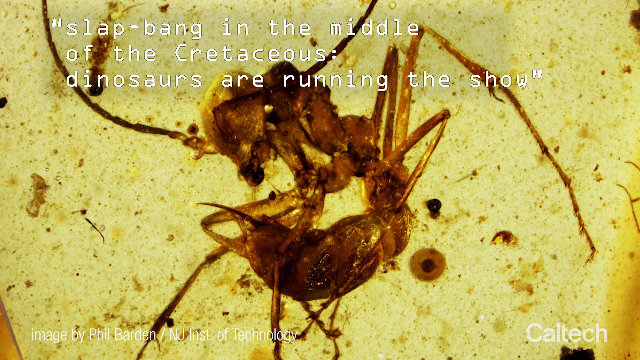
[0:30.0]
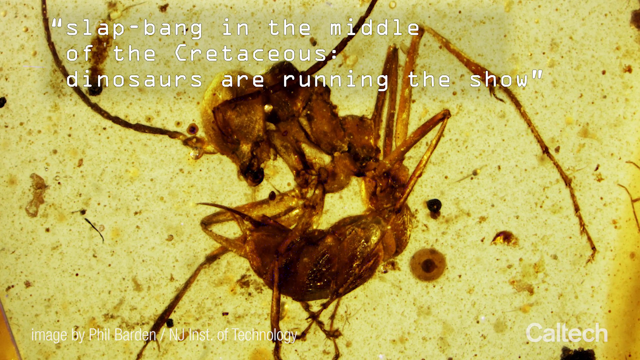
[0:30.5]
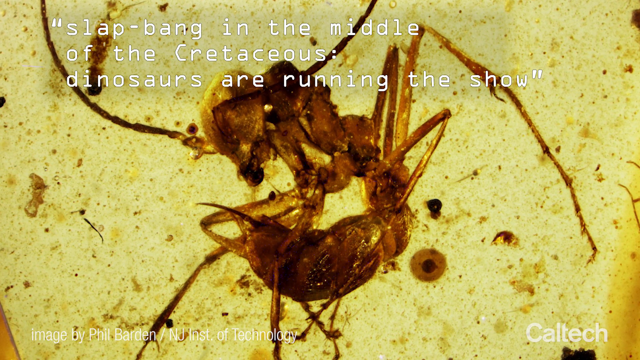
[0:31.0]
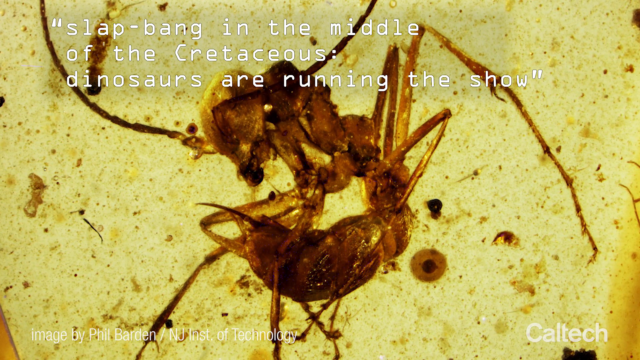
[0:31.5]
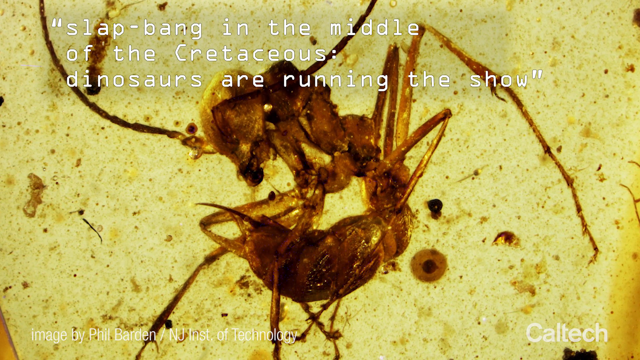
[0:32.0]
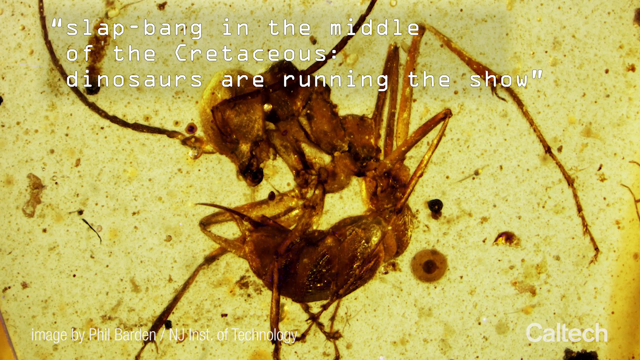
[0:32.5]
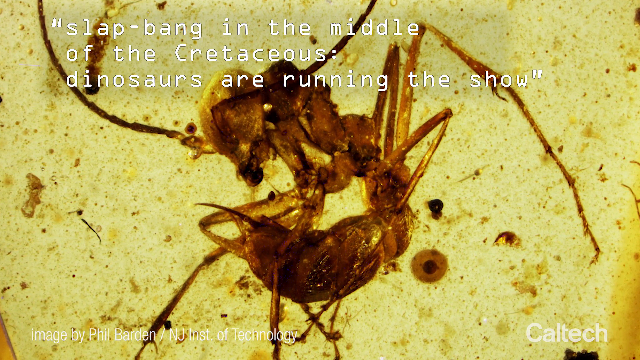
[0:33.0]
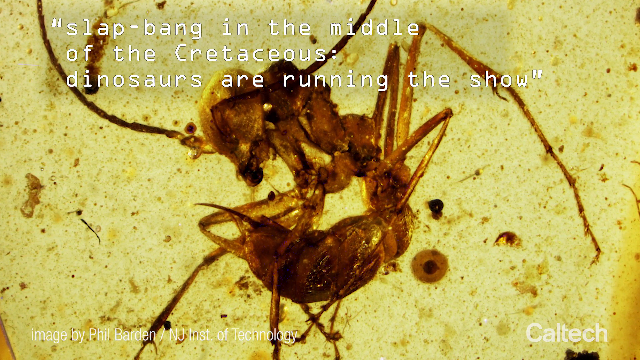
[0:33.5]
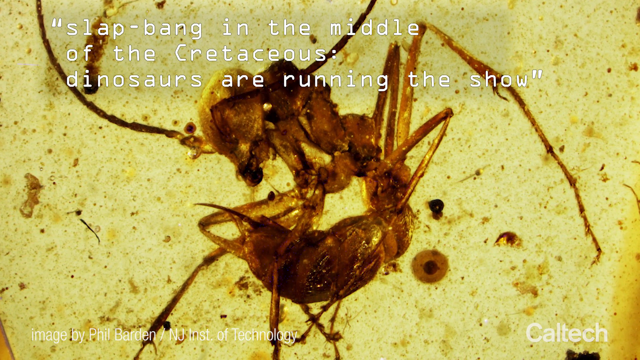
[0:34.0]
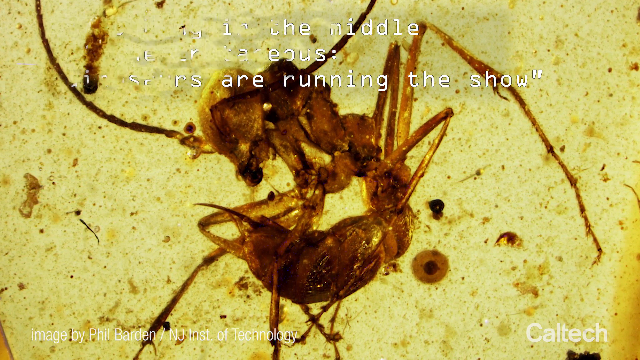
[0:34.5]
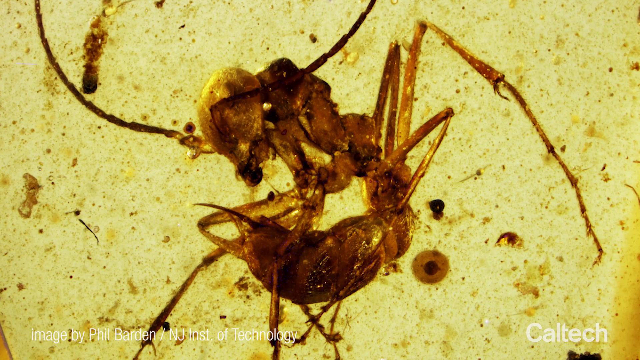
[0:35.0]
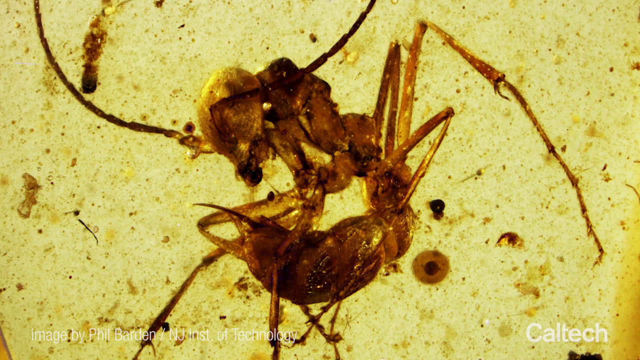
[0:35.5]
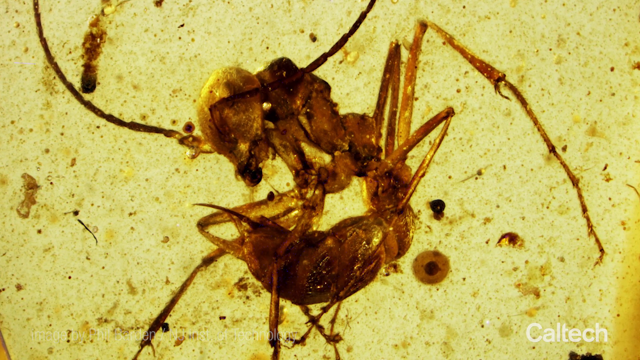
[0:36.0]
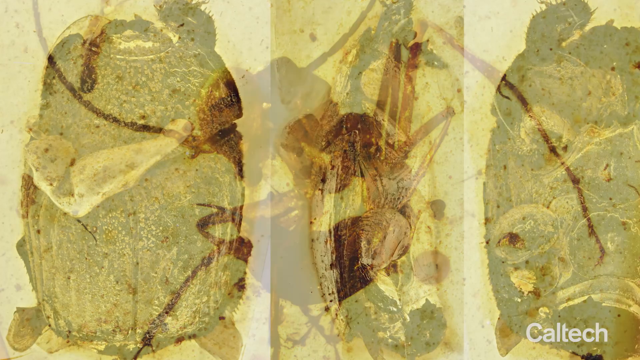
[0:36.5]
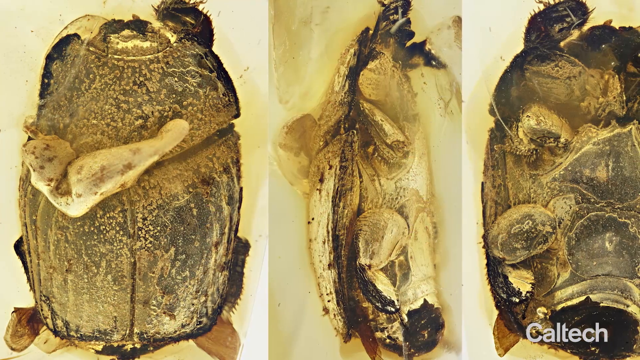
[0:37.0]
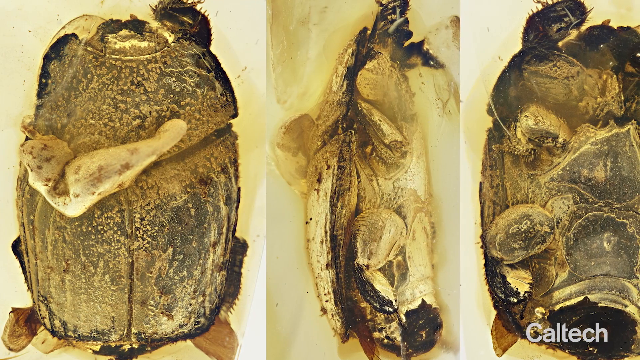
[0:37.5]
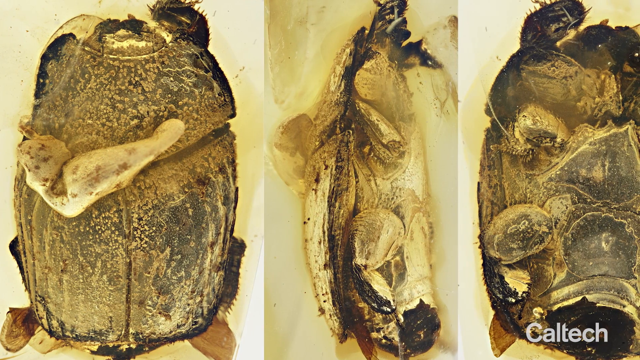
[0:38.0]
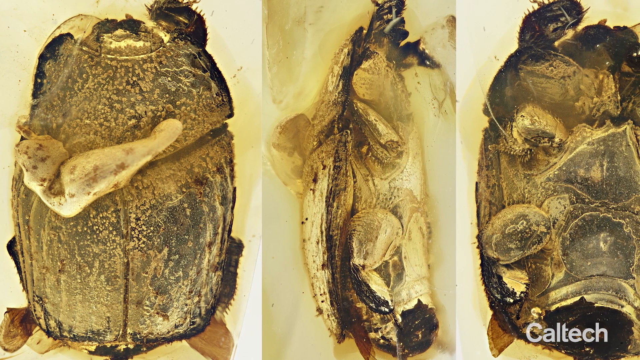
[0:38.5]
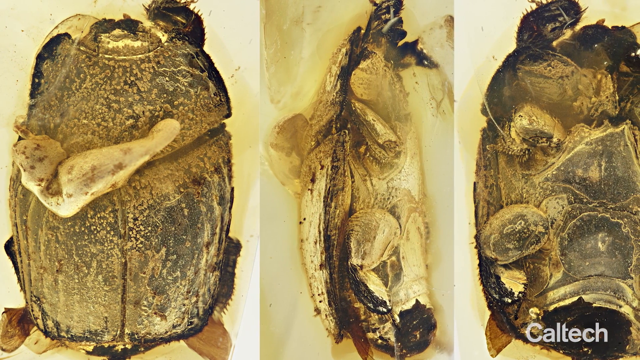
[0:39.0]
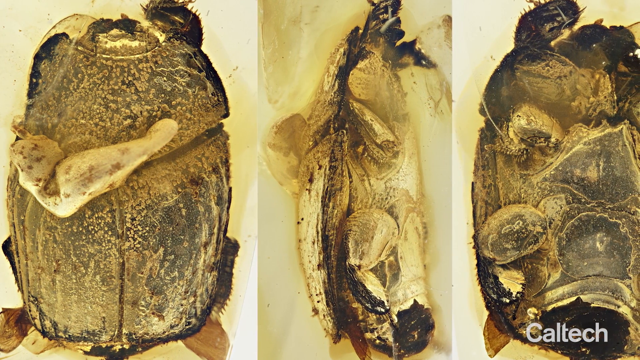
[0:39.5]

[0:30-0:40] The two creatures preserved in amber are apparently hugging each other with their forearms. They are dark and light brown against an amber-colored background, and specks of unidentified material are also encased in the amber. The view then changes to three vertical slides showing different parts of the creature in microscopic detail; some of the creature's organs, or at least ovals, are visible under the skin. The camera pans slightly over the three rectangles and then changes to the initial graphic.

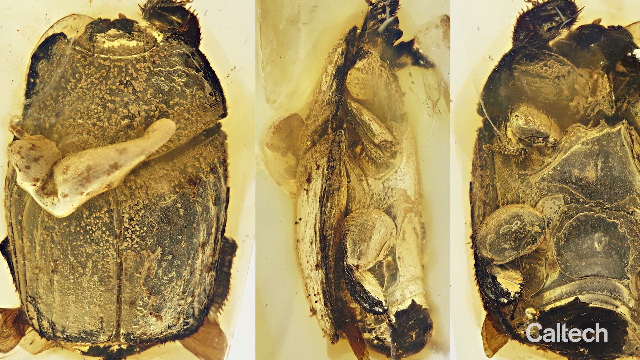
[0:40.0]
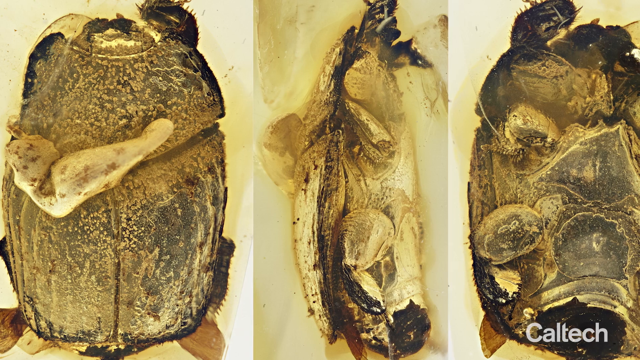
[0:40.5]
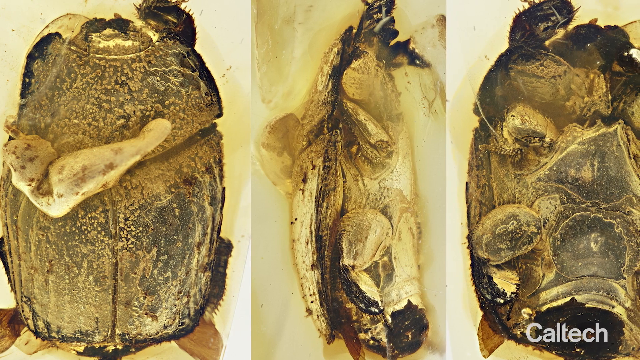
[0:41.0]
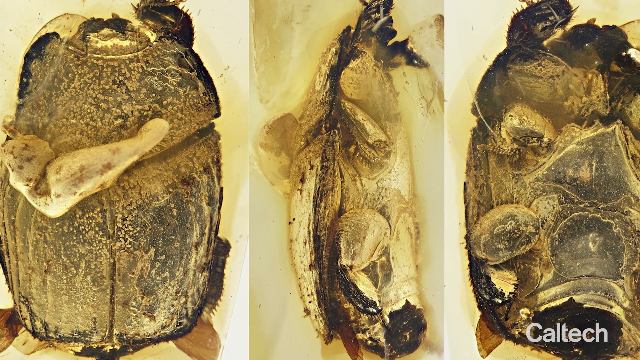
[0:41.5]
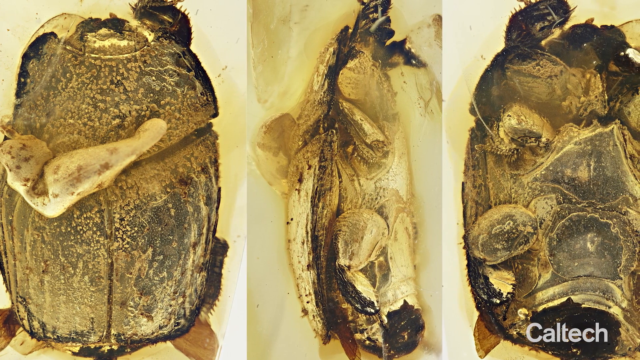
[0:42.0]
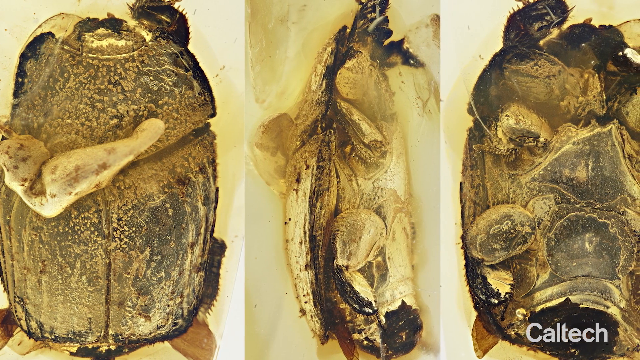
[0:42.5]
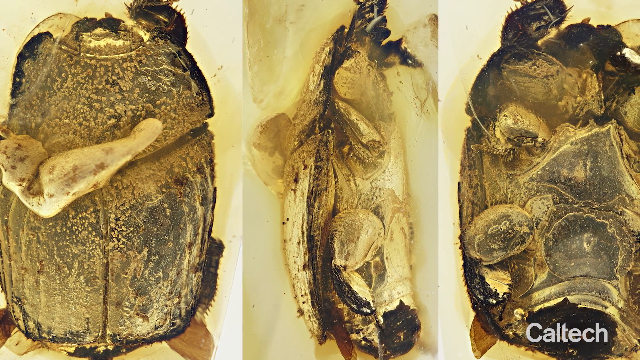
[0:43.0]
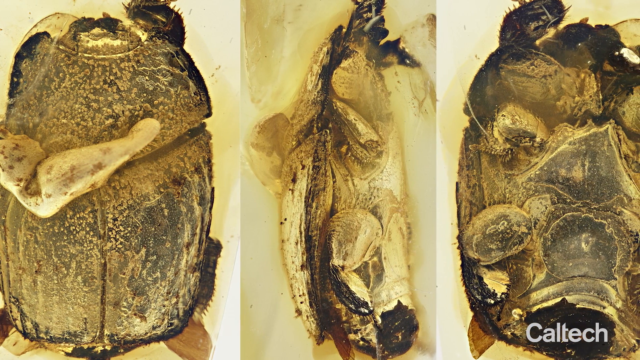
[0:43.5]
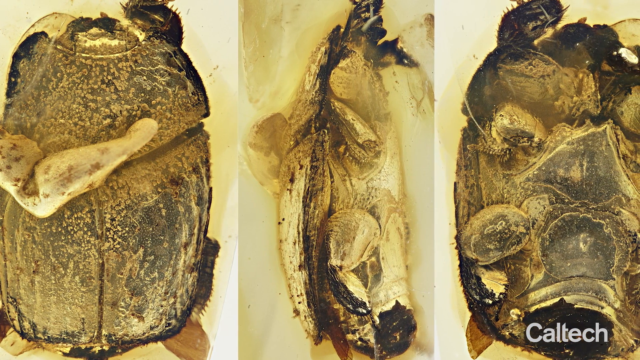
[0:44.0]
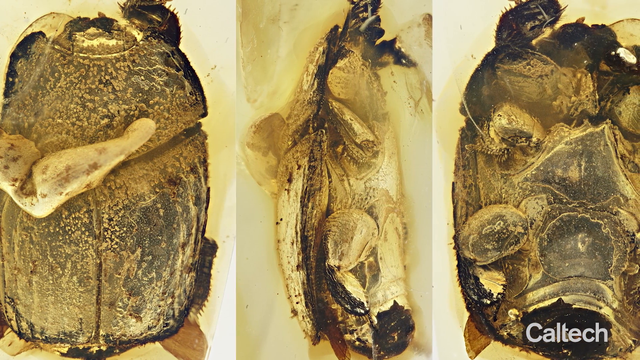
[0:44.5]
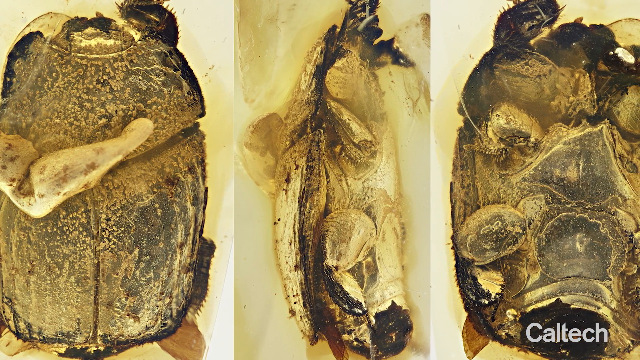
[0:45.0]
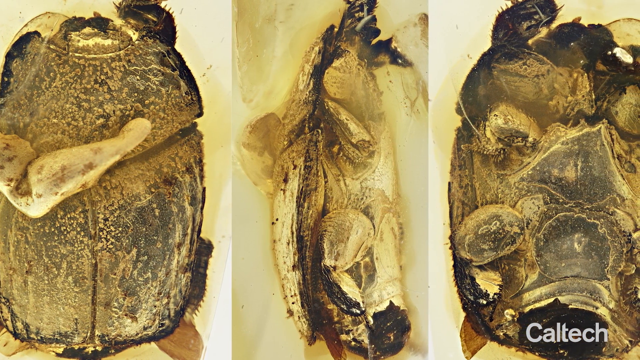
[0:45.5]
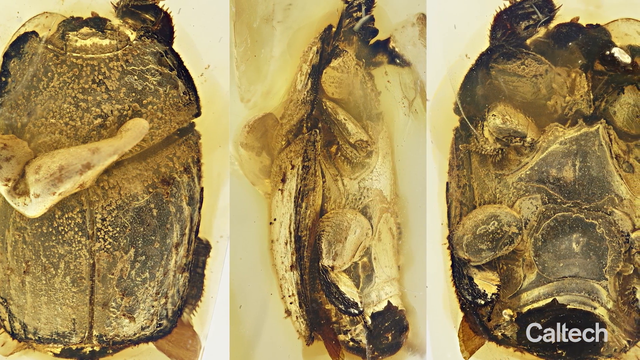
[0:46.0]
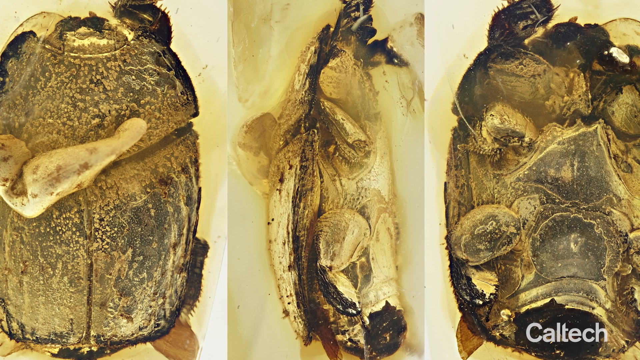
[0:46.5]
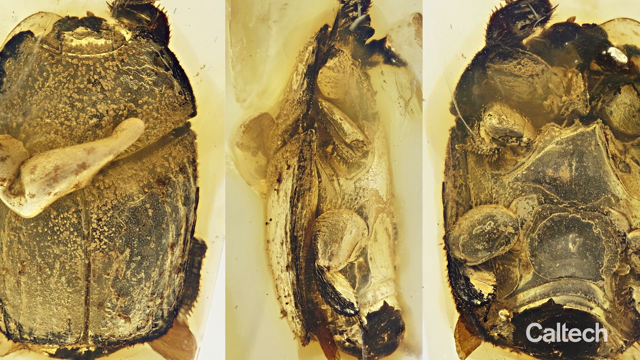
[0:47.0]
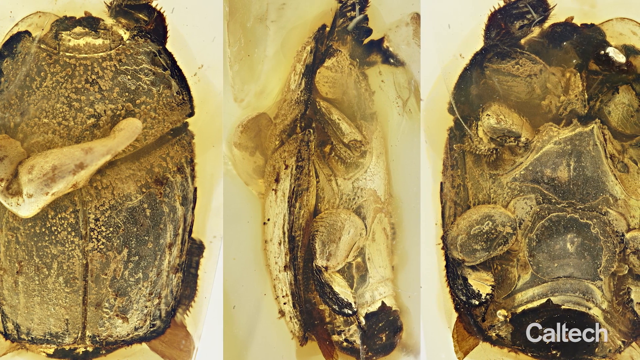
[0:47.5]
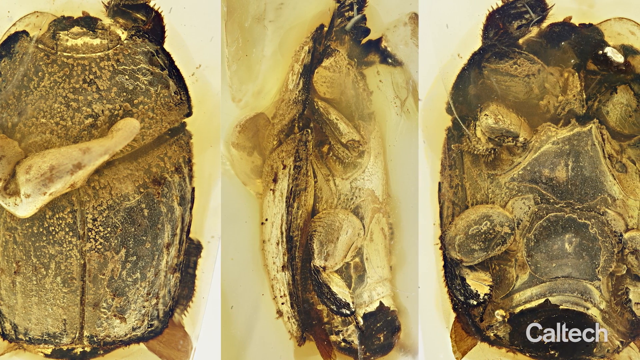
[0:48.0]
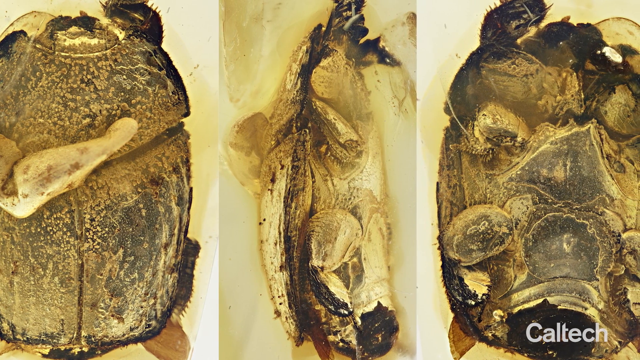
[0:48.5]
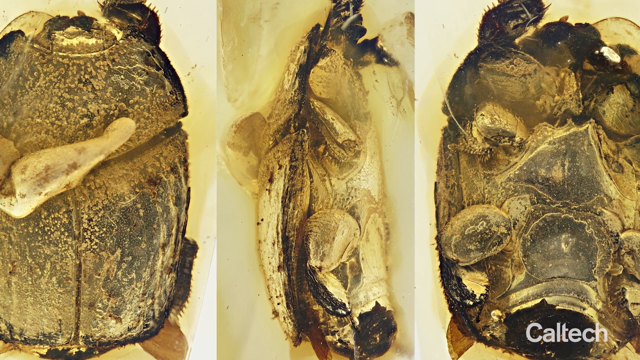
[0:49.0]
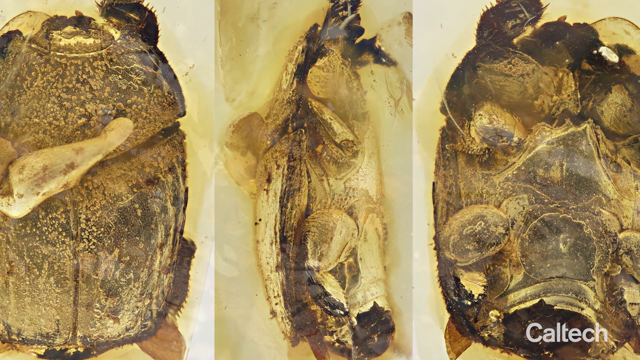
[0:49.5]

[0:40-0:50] The three vertically arranged slides continue, showing illustrations of the creature in a lot of detail, and the name Caltech appears in the lower right. None of the structures shown are named in text. The overall colors are black, tan and yellow.